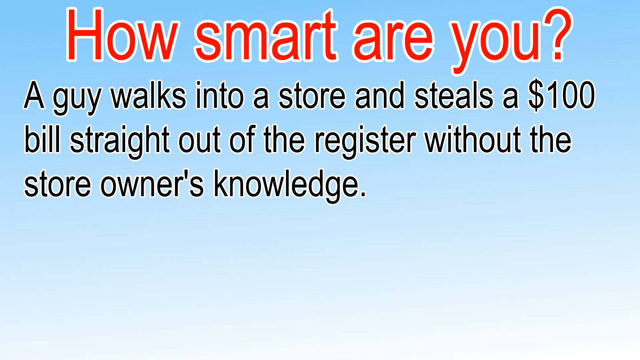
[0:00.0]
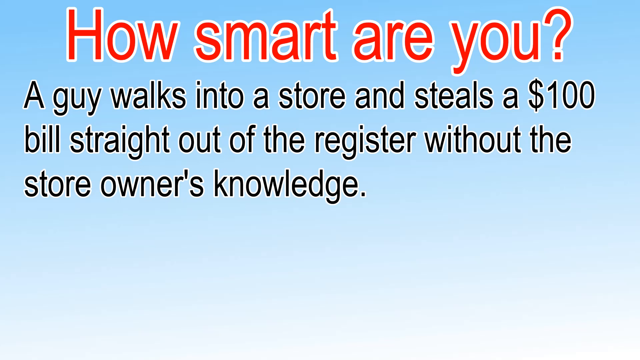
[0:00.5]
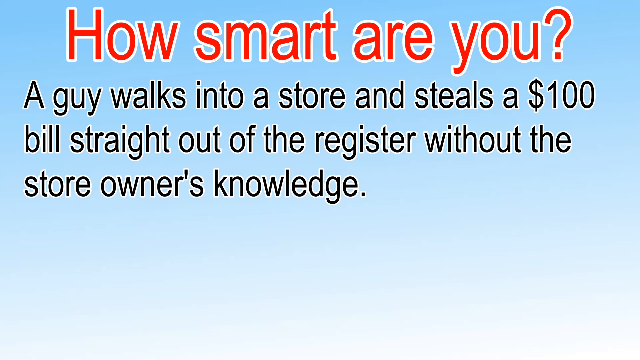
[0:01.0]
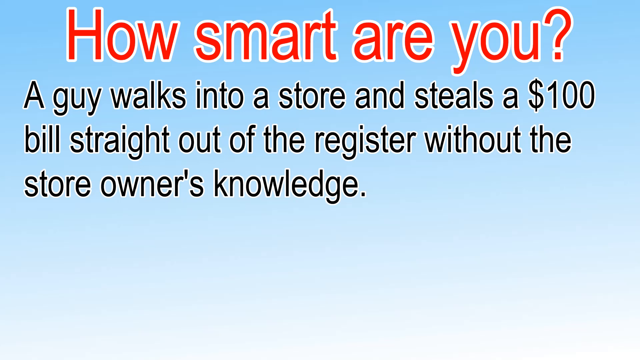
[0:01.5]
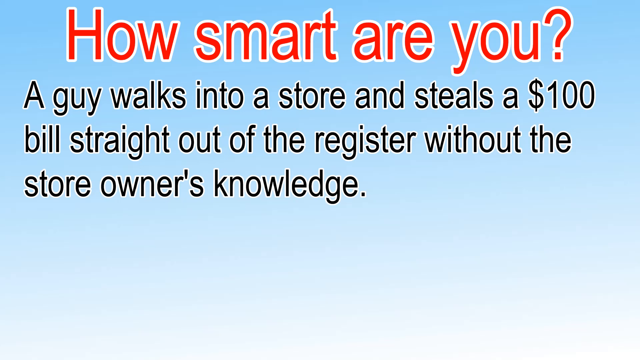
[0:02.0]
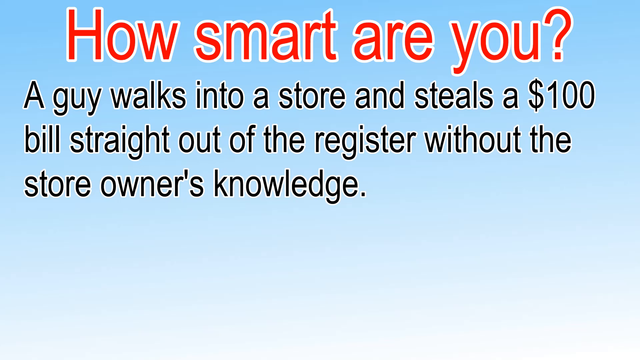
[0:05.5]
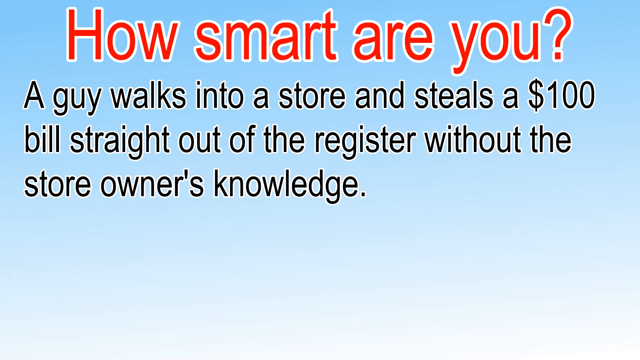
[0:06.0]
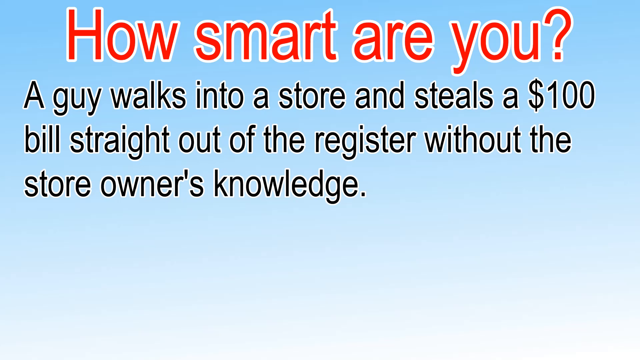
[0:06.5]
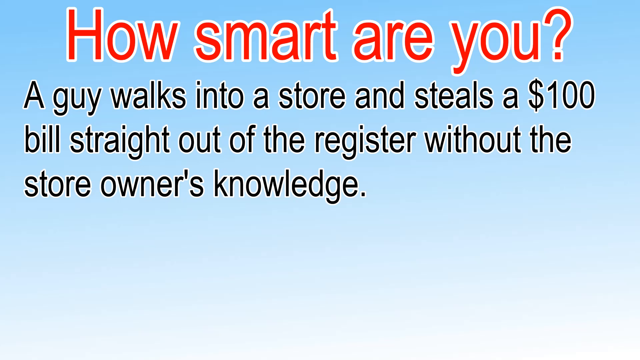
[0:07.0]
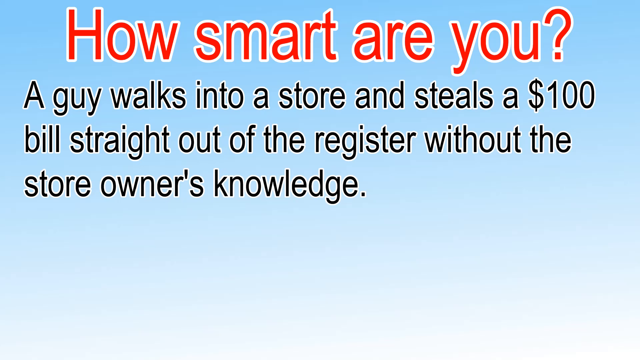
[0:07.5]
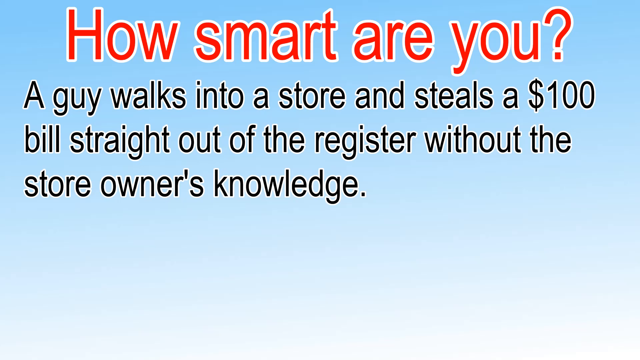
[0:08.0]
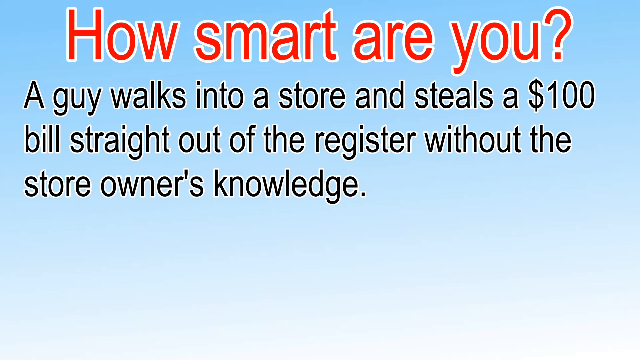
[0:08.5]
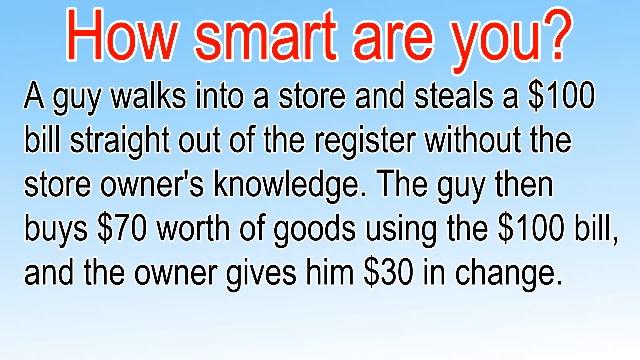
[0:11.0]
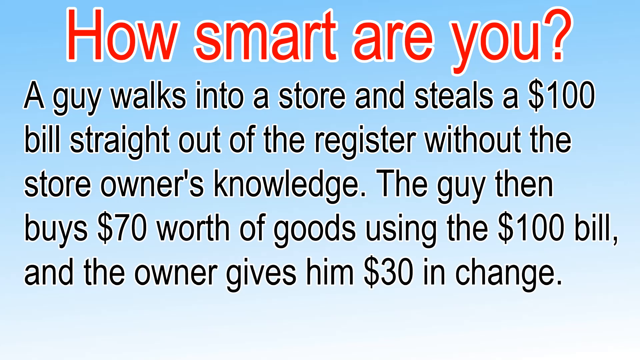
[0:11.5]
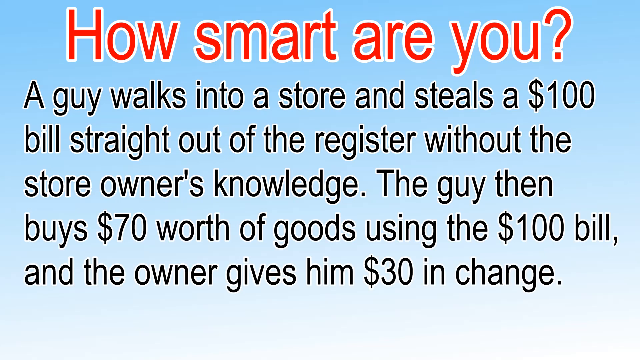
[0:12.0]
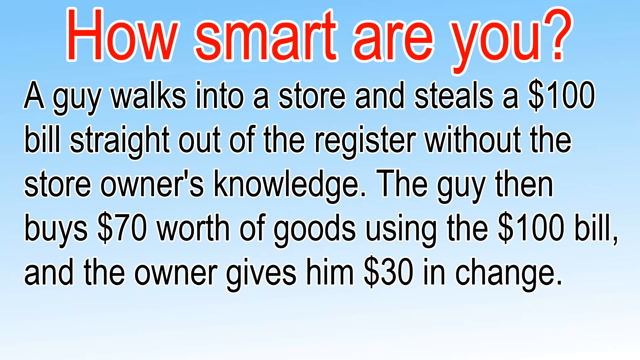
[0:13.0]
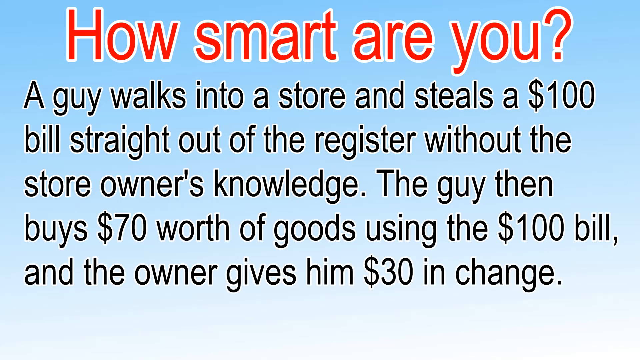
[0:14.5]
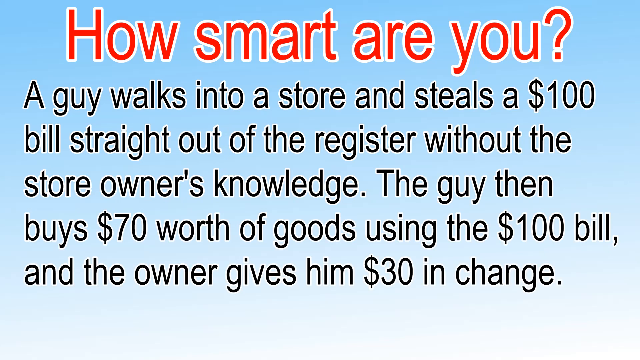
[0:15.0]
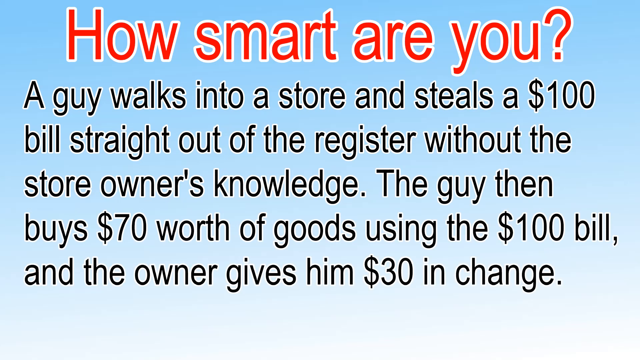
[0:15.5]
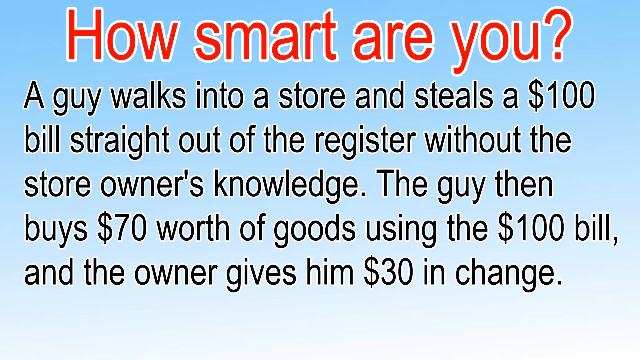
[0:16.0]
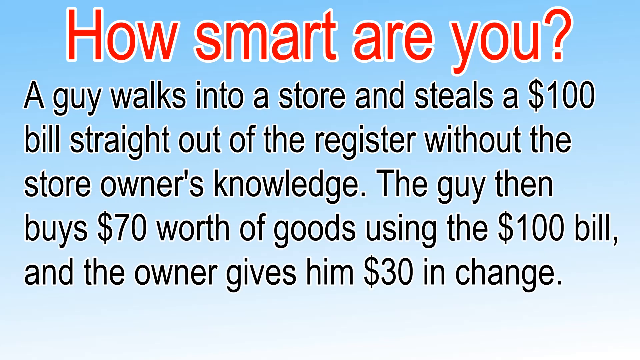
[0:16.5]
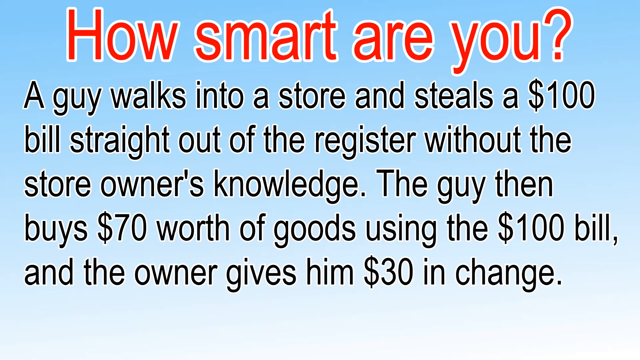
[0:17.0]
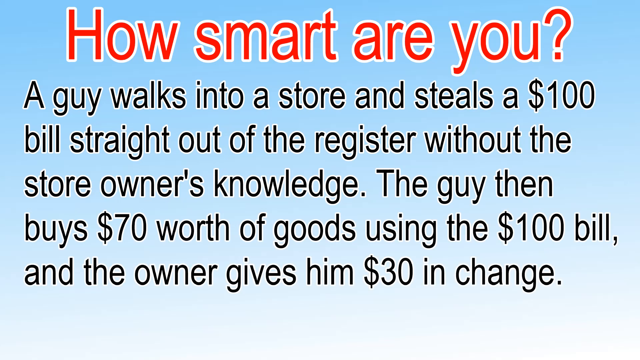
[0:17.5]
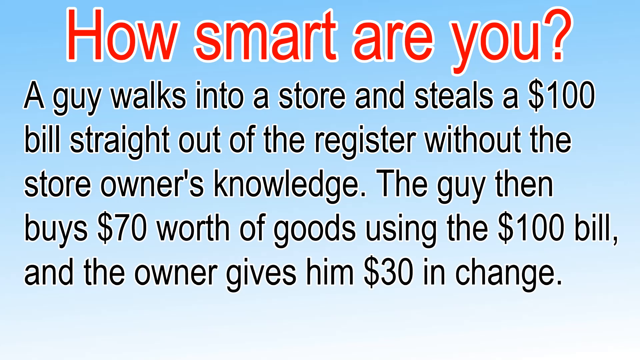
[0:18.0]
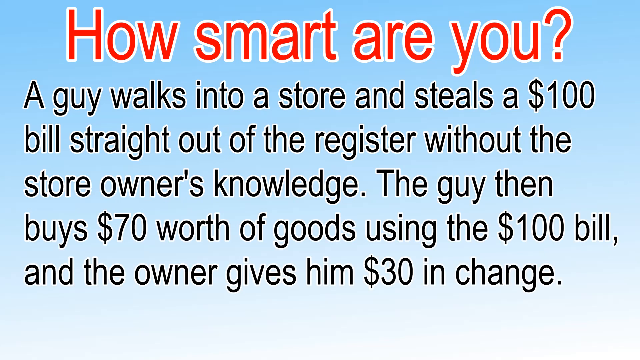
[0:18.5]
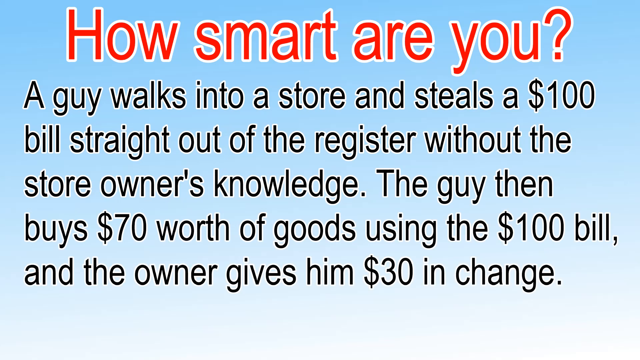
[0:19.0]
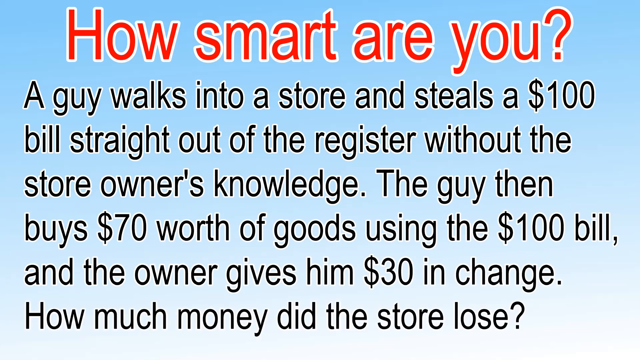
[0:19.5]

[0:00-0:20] The screen has a blue background, and at the top, in large, bold red letters with a small white outline, the text reads "how smart are you?" Underneath, in somewhat smaller black letters, it says "a guy walks into a store and steals a $100 bill straight out of the register without the store owner's knowledge. The guy then buys $70 worth of goods using the $100 bill and the owner gives him $30 in change." It seems to be a joke written out as text. The light blue background has a kind of gradient, getting darker toward the bottom until it becomes a kind of black, fuzzy color at the very bottom. There are no images; the whole screen is taken up by the large text.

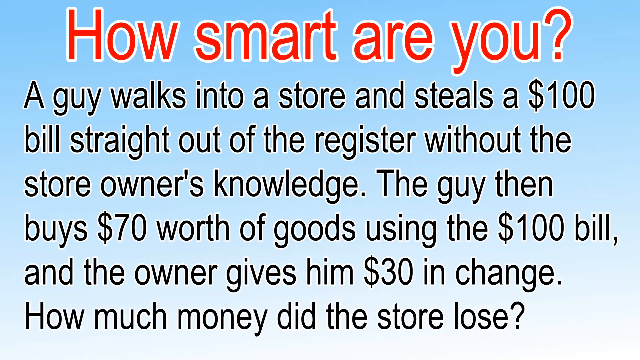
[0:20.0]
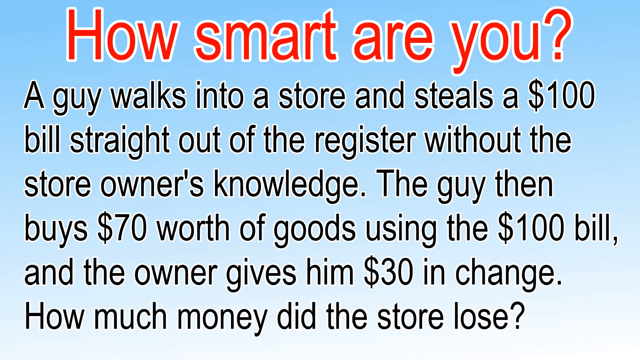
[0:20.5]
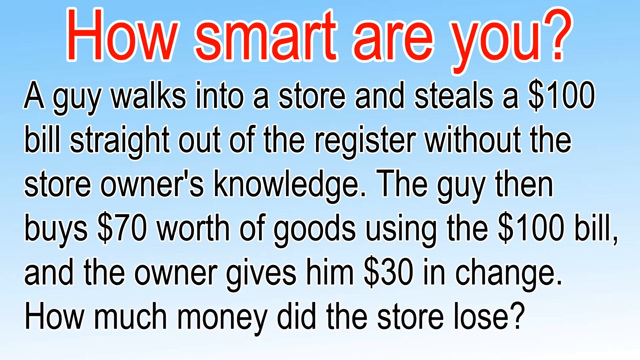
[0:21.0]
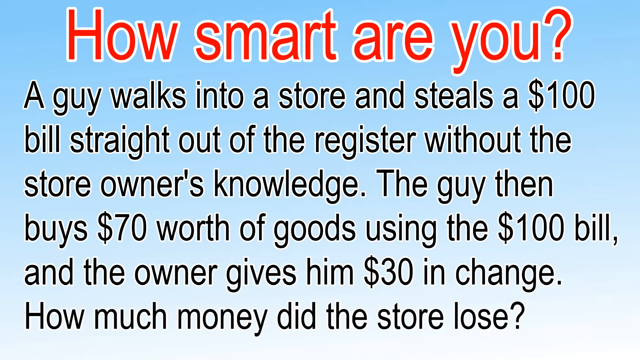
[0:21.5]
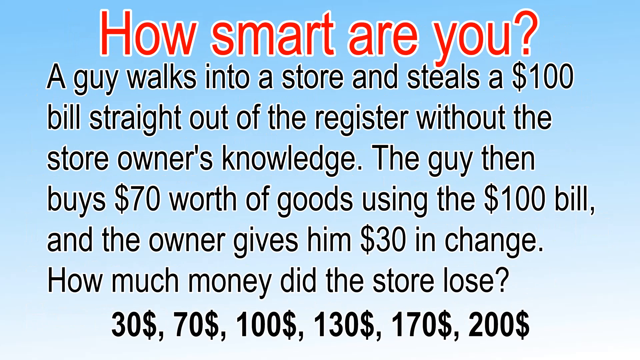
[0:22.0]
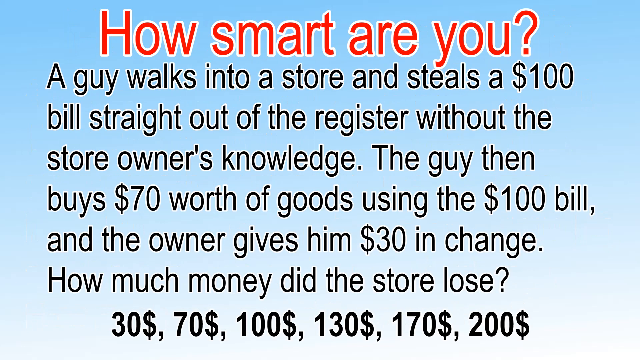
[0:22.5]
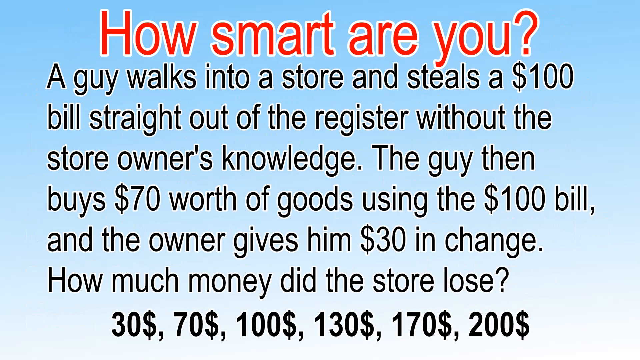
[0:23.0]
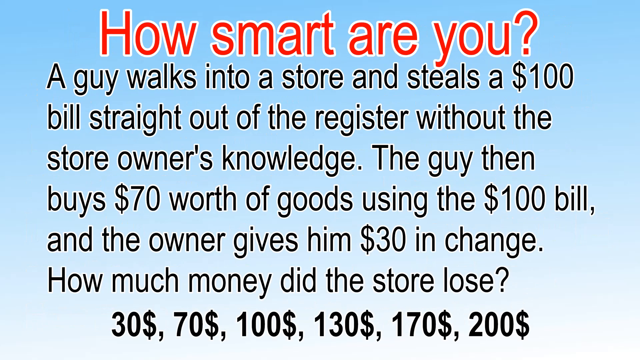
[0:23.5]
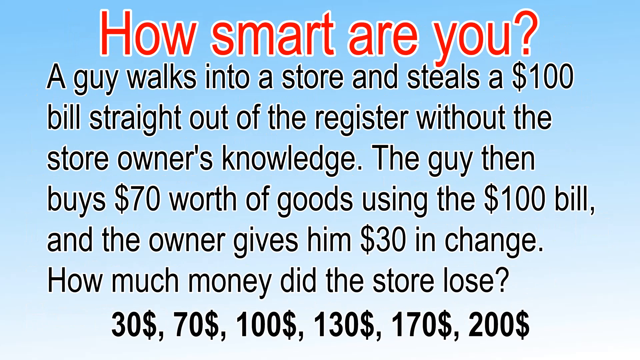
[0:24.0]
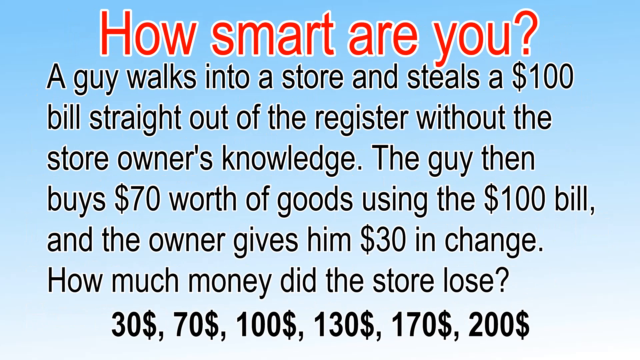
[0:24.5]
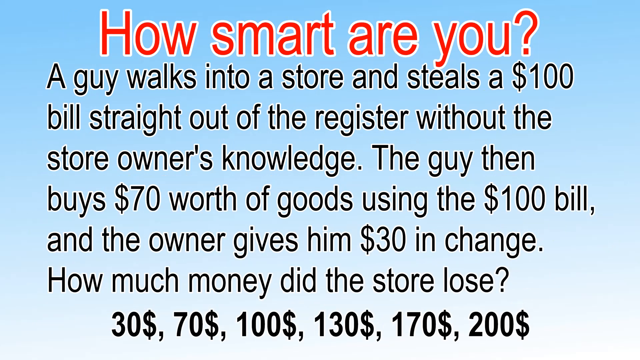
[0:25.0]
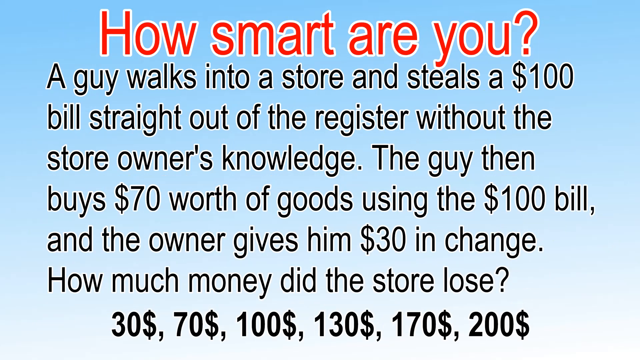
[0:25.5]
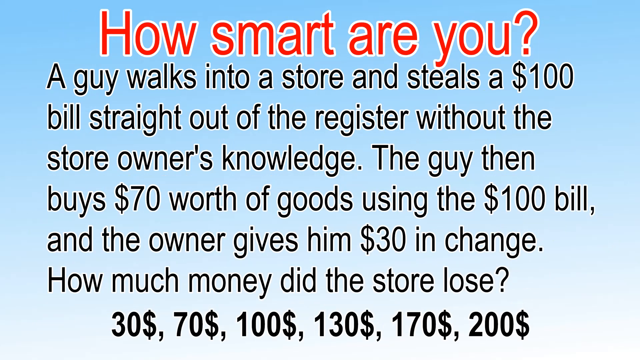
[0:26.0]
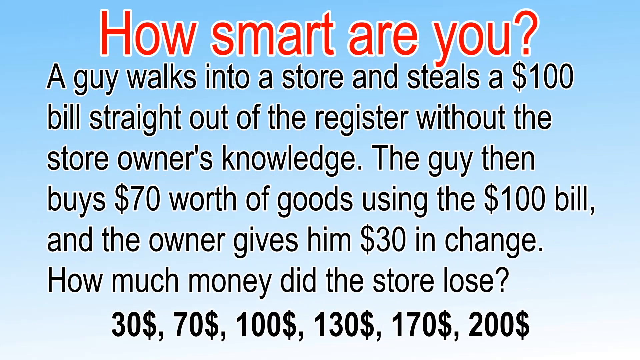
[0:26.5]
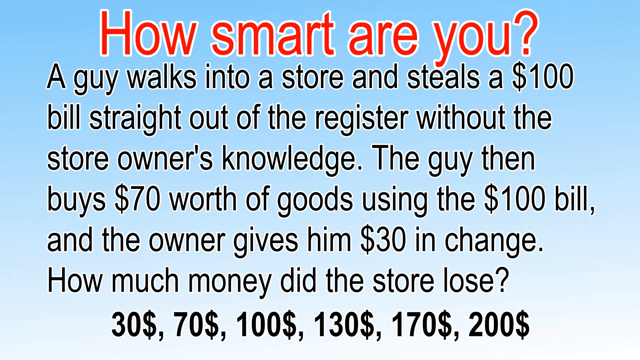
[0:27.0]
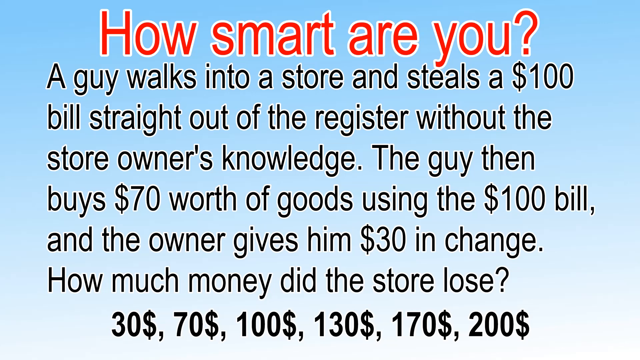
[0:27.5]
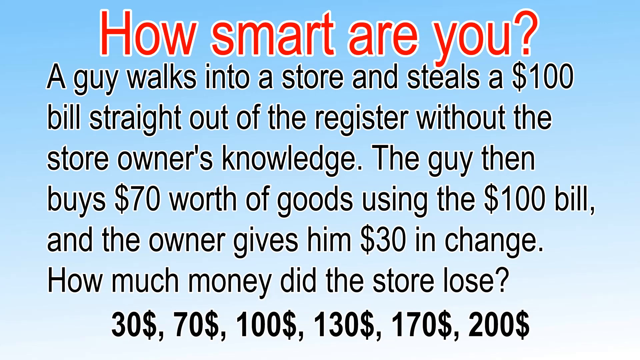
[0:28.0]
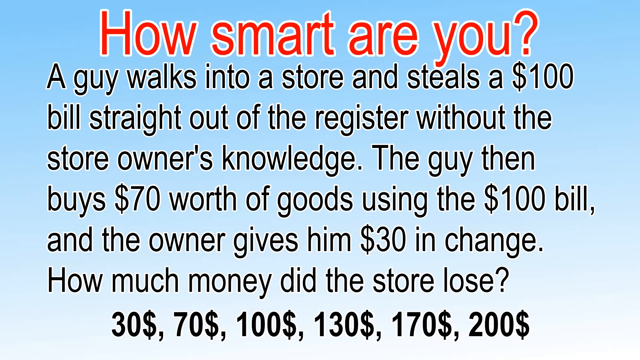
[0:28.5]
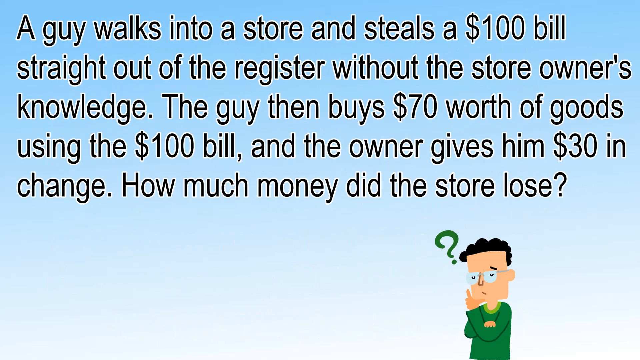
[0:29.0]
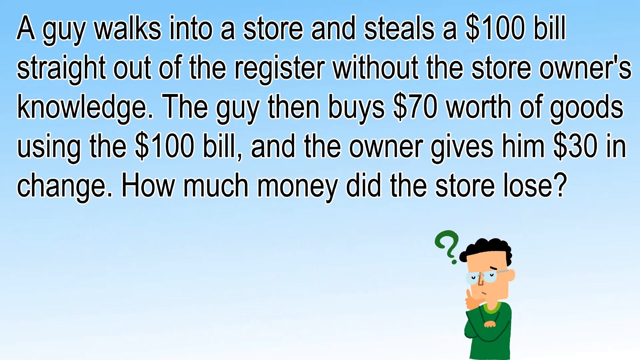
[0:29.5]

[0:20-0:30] On a light blue background, red bold letters with a slight white outline at the very top read "how smart are you?" Underneath, smaller black text with a little white outline reads "A guy walks into a store and steals a $100 bill straight out of the register without the store owner's knowledge. The guy then buys $70 worth of goods using the $100 bill and the owner gives him $30 in change. How much money did the store lose?" Answer options then pop up at the bottom of the screen in bold numbers: $30, $70, $100, $130, $170 and $200.